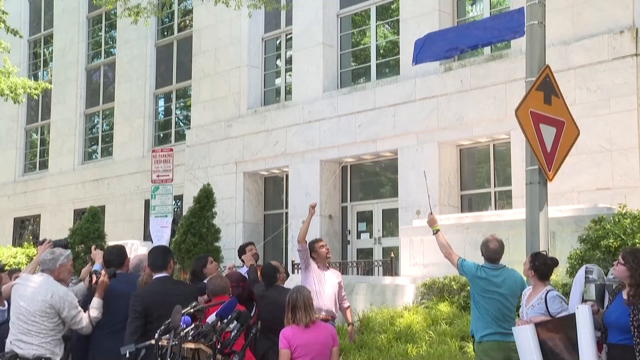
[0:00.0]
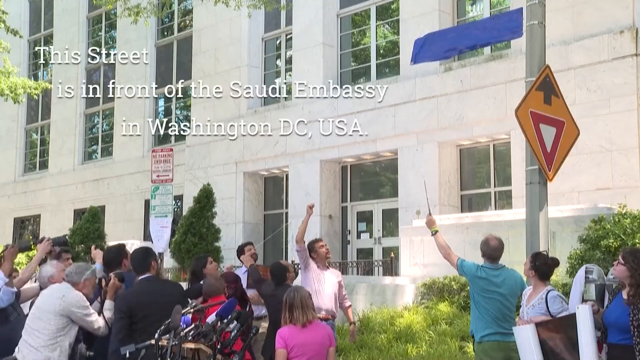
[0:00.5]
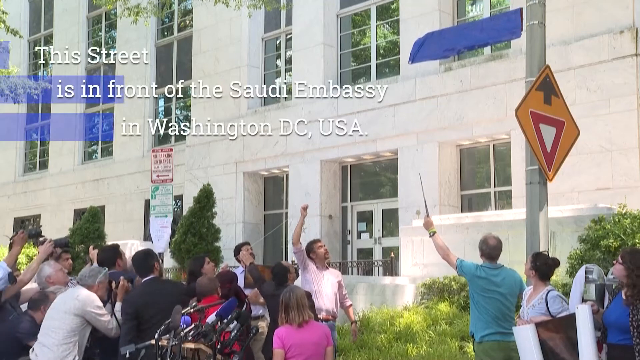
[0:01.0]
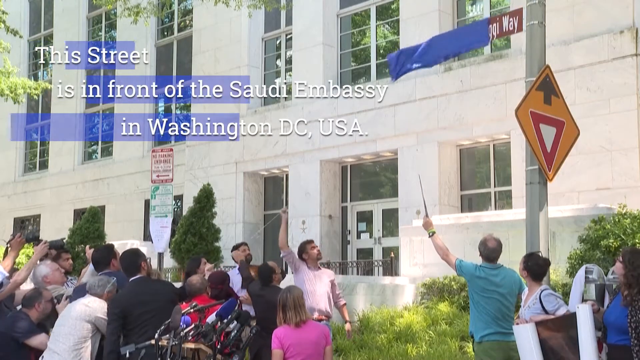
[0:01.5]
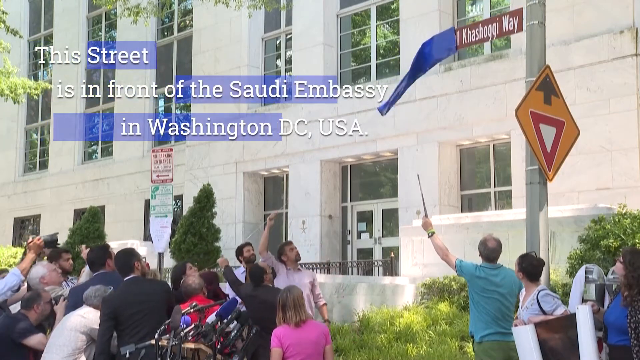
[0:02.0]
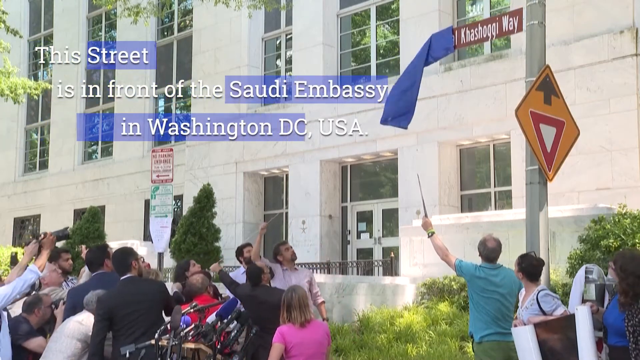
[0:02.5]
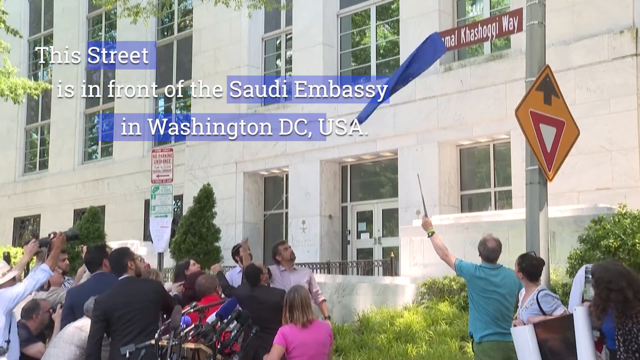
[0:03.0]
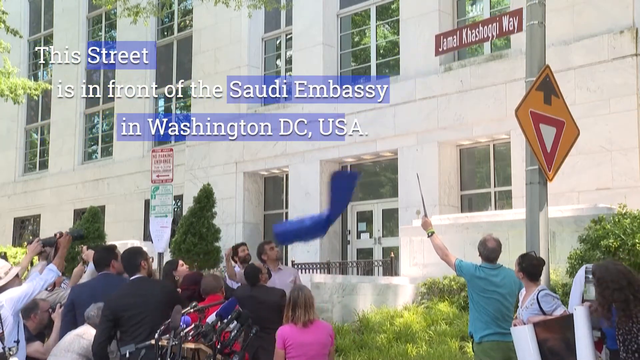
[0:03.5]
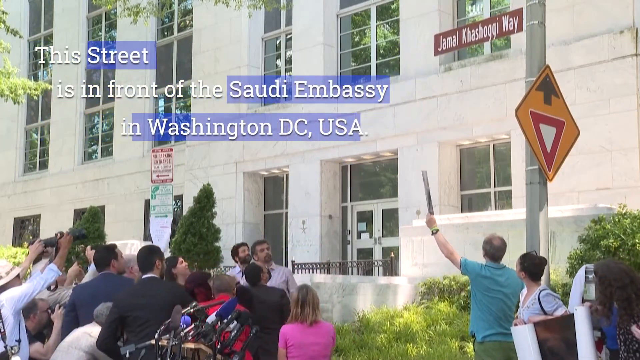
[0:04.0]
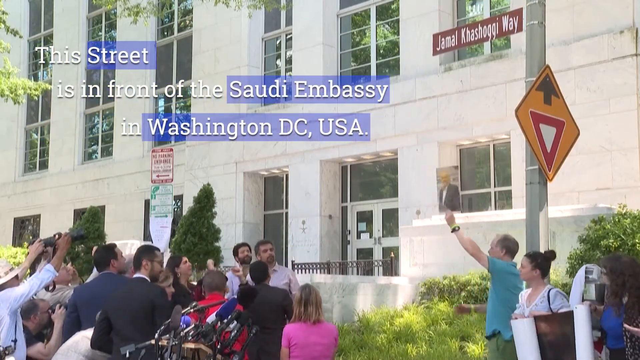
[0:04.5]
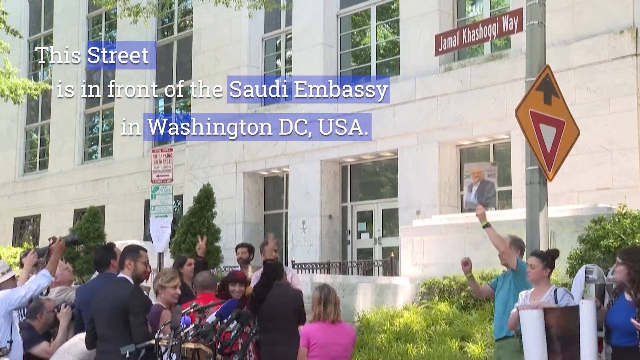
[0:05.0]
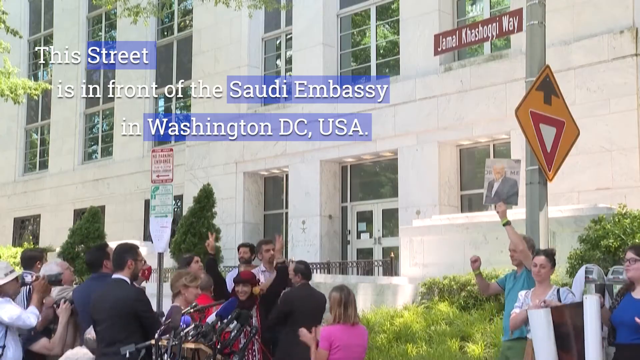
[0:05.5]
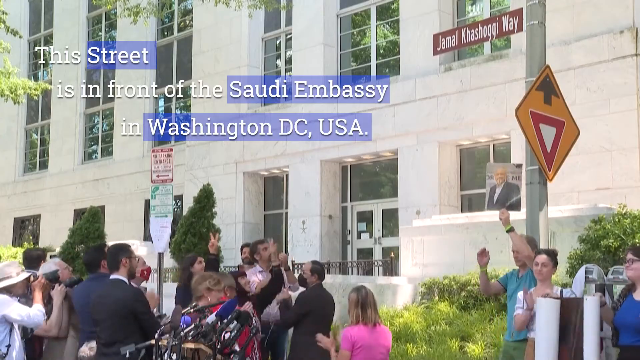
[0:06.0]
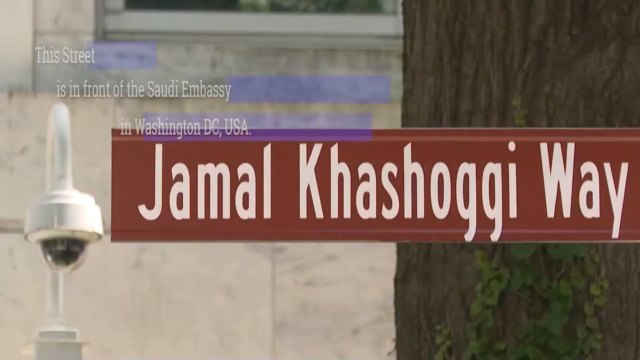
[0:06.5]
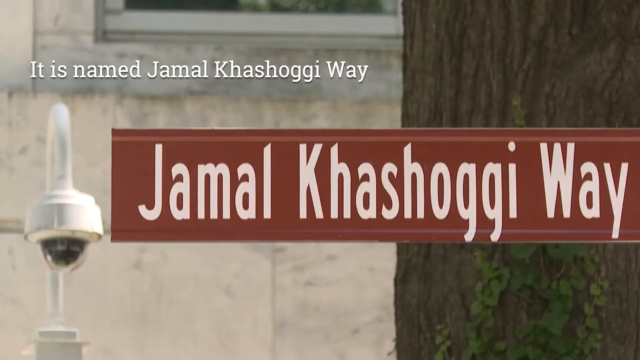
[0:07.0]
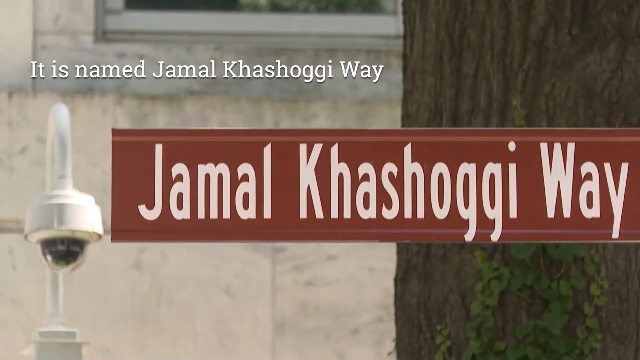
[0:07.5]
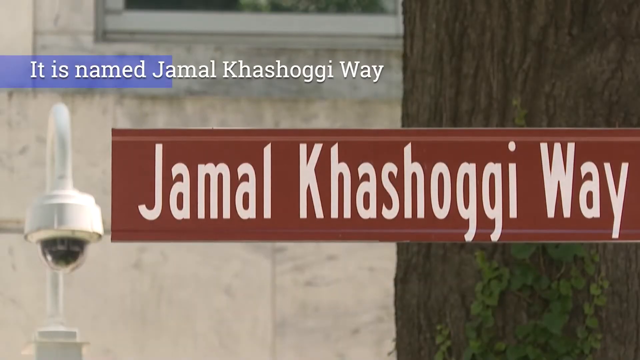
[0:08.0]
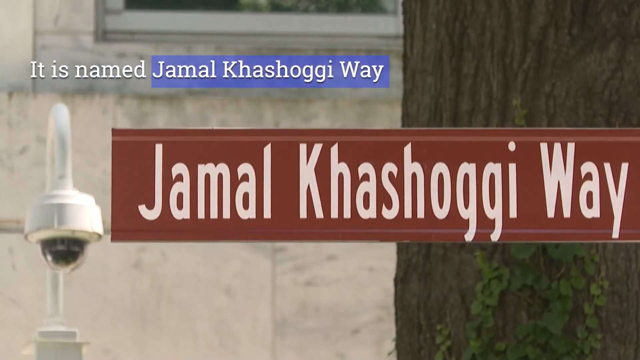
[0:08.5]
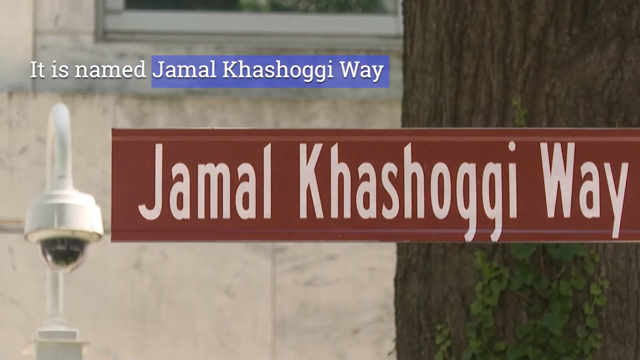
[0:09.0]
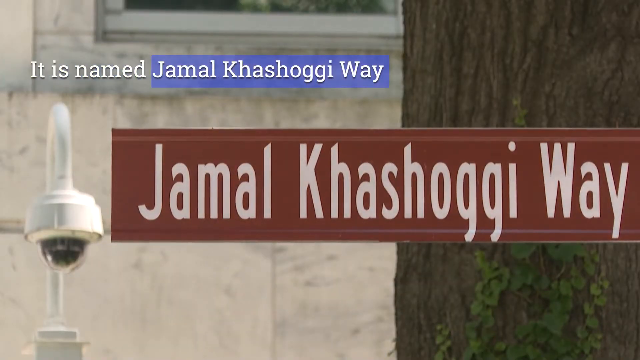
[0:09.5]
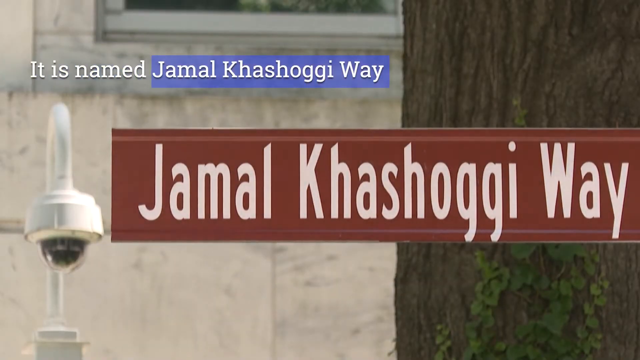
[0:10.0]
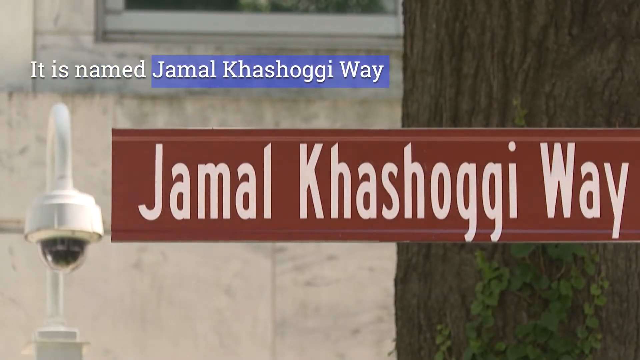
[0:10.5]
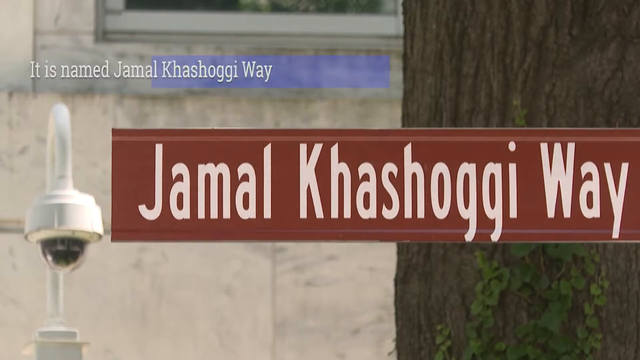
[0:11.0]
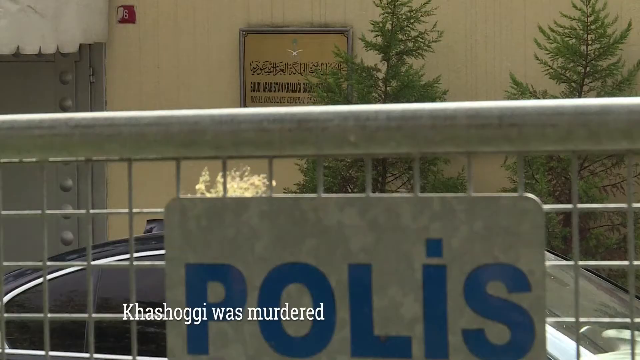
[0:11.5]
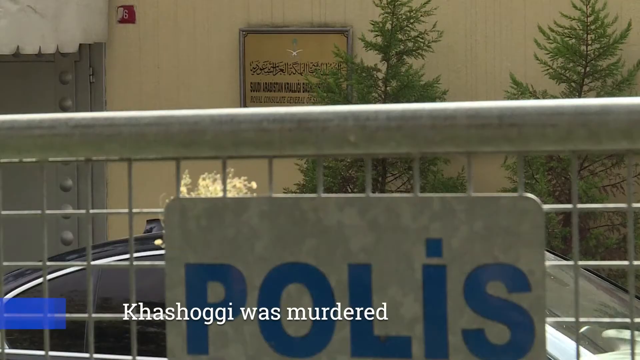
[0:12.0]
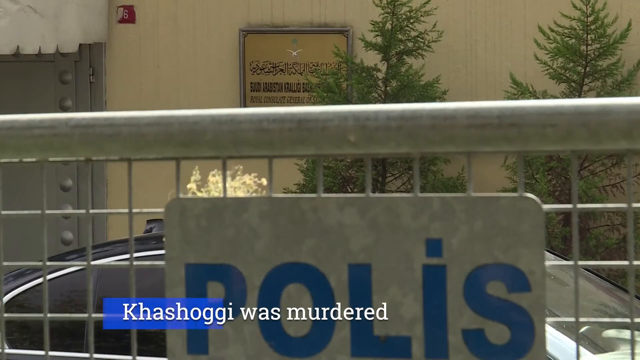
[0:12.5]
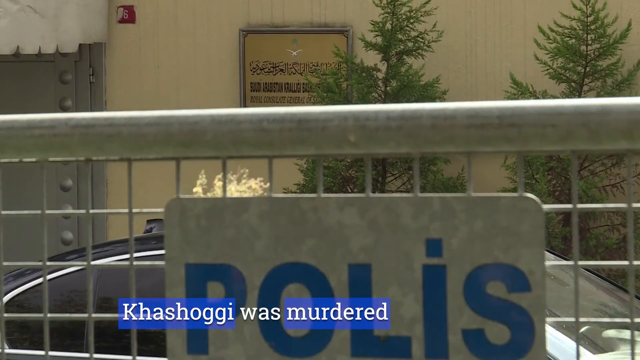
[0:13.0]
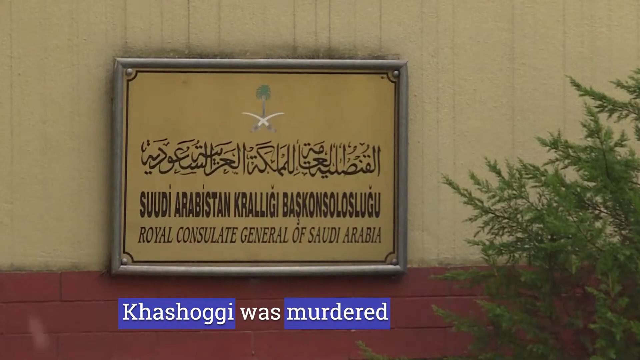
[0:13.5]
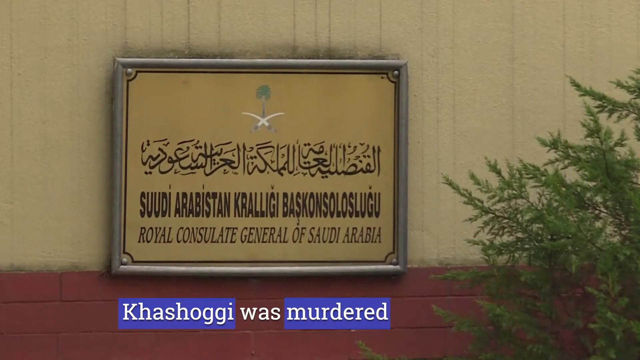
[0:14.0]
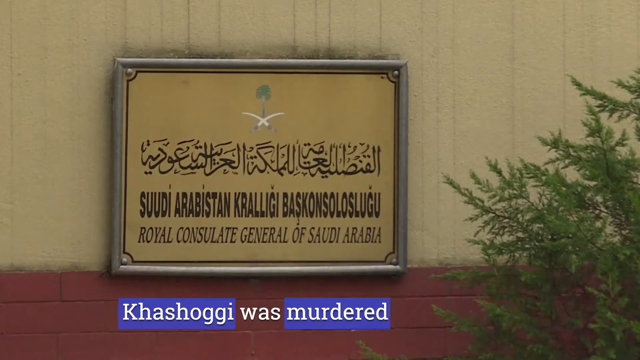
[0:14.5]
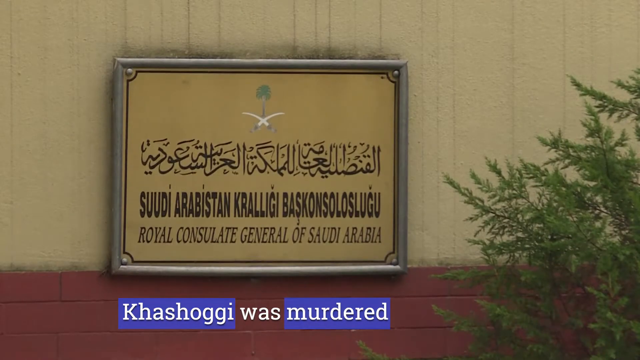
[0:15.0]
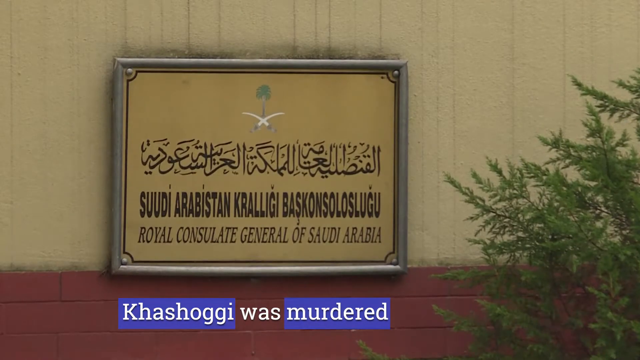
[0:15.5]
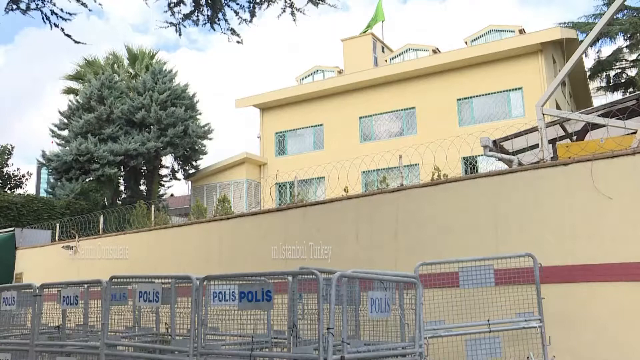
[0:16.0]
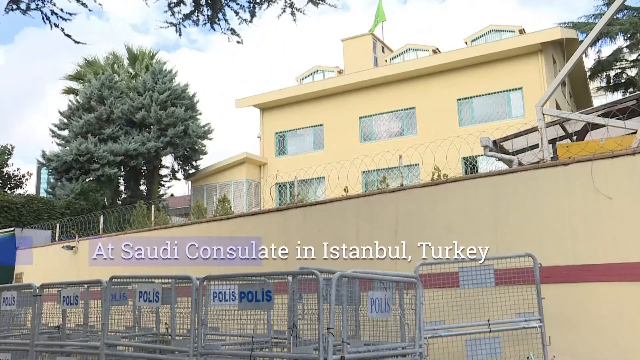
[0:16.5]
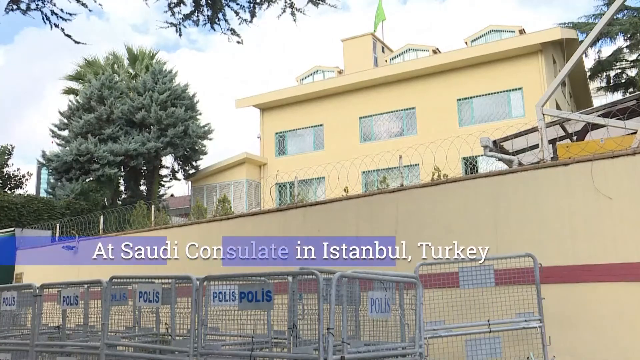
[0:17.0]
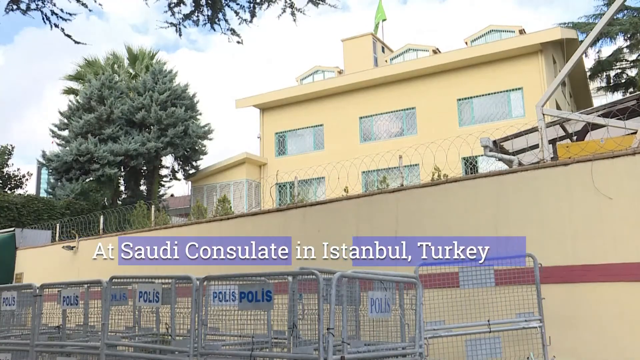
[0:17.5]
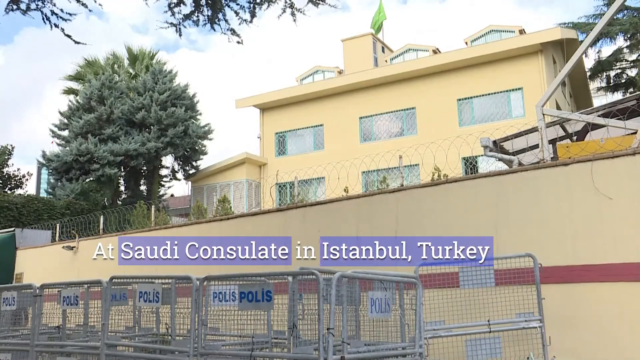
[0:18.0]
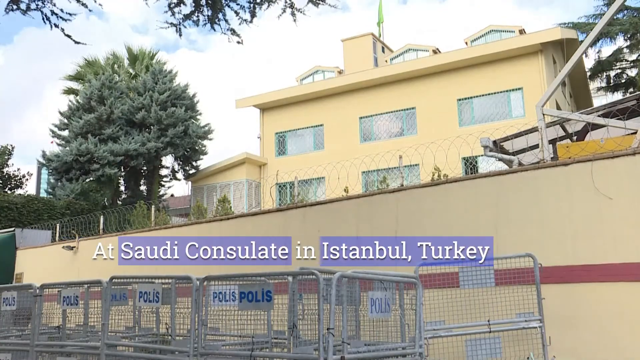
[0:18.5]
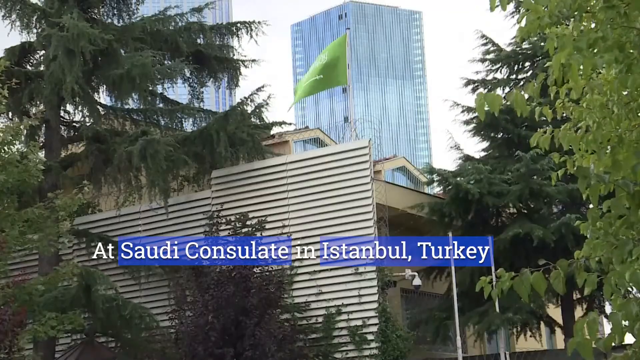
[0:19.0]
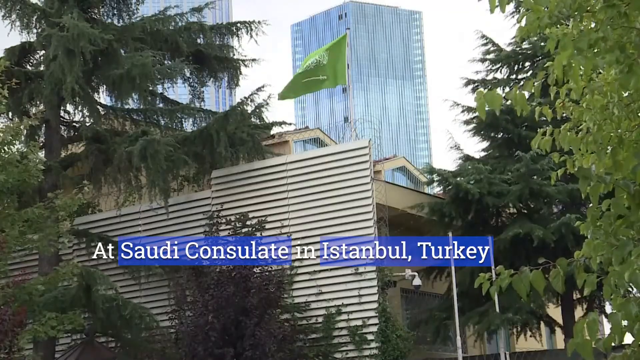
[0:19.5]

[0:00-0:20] A crowd of people, about 20 visible, stands in front of some sort of official, perhaps government, building. Several of them raise their hands and hold up fists, and the mood seems to be one of anger. Text appears at the top of the frame reading "This street is in front of the Saudi embassy in Washington, D.C., USA." The event turns out to be the naming of a street: a sock is pulled off the street name sign, revealing "Jamal Khashoggi Way" in white print on a brown sign. People then hold up V-for-victory signs and a picture of Khashoggi.